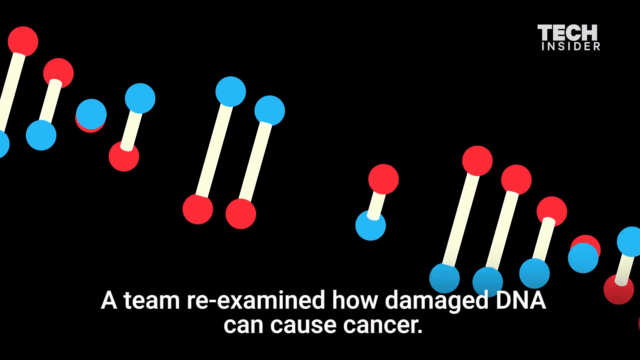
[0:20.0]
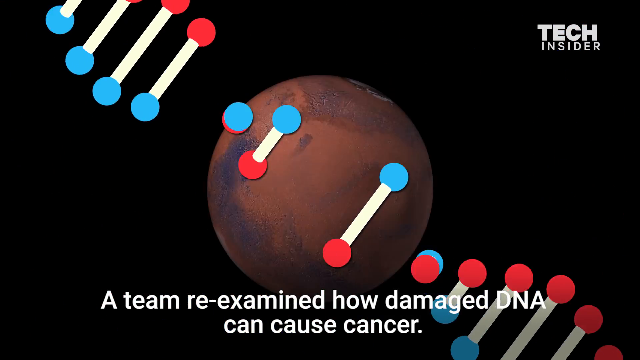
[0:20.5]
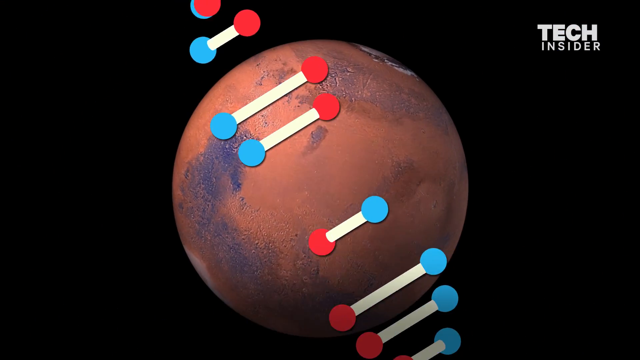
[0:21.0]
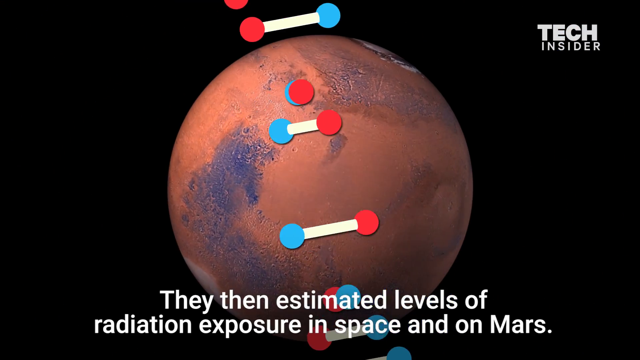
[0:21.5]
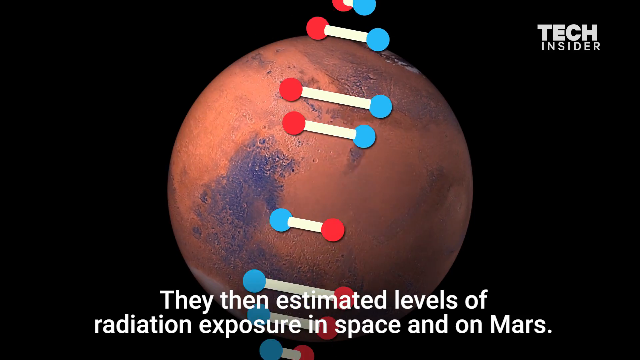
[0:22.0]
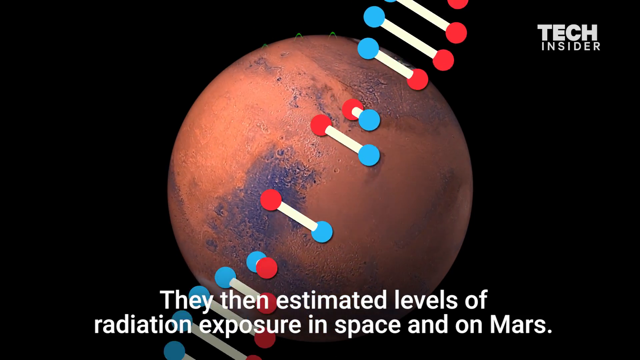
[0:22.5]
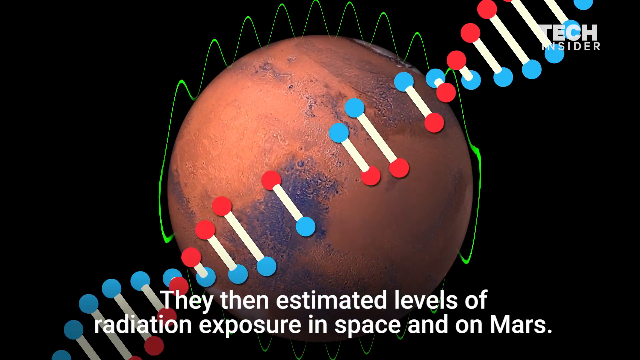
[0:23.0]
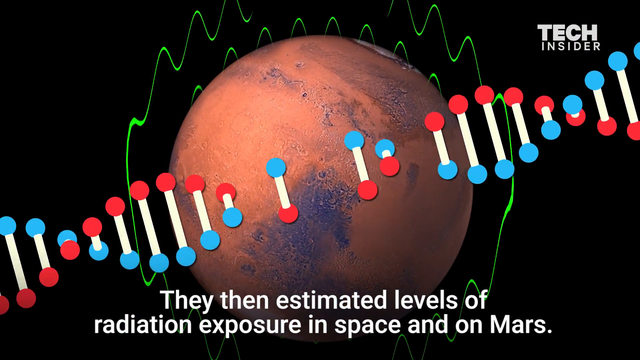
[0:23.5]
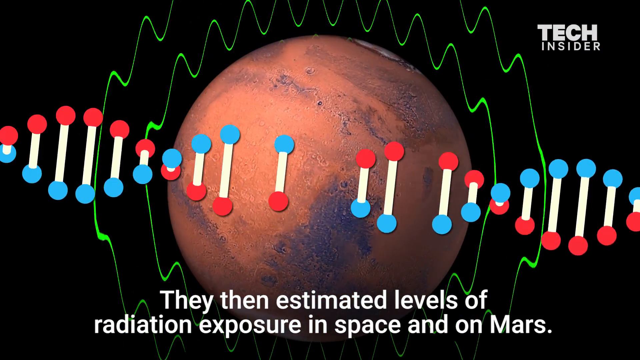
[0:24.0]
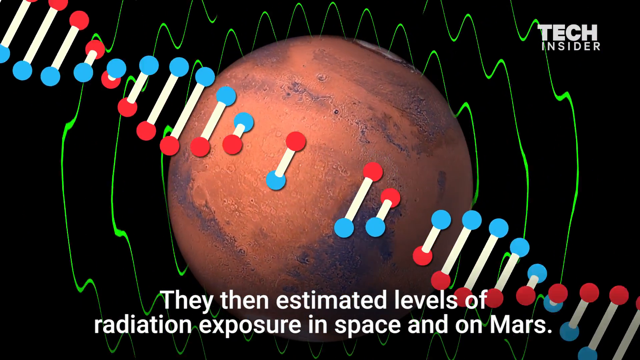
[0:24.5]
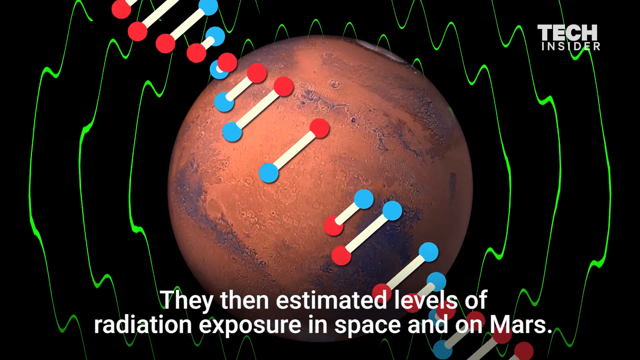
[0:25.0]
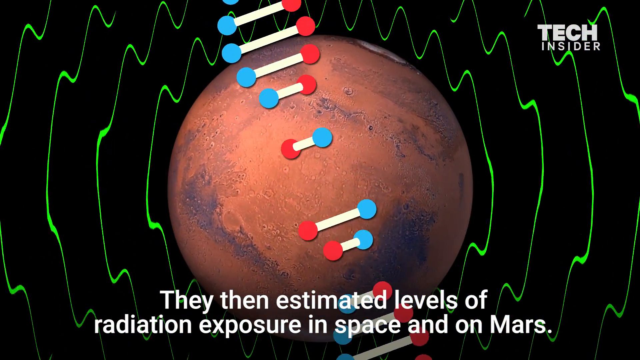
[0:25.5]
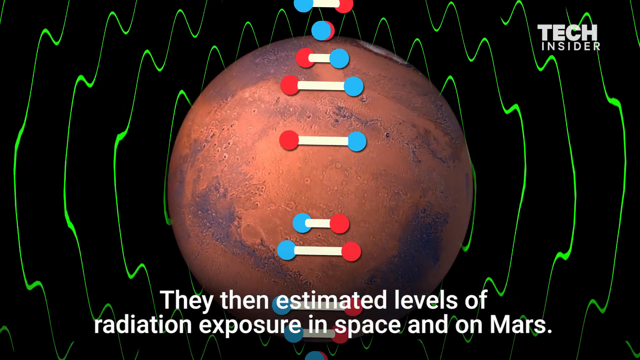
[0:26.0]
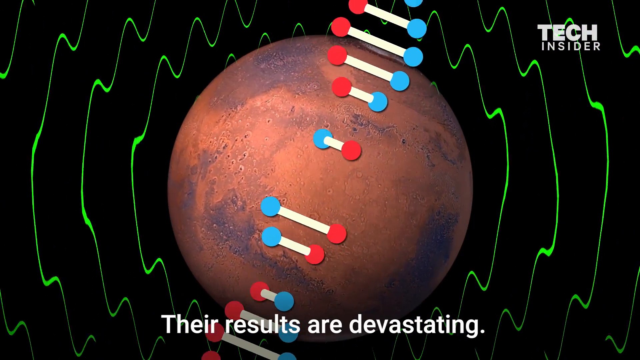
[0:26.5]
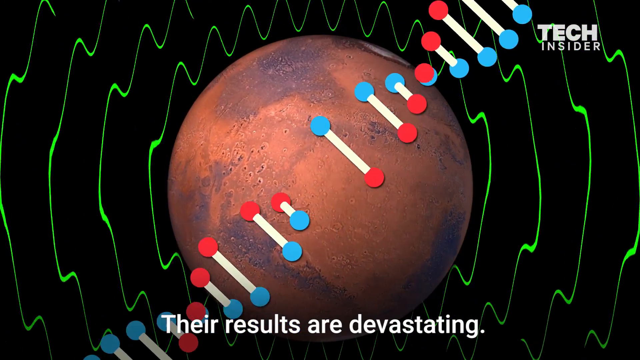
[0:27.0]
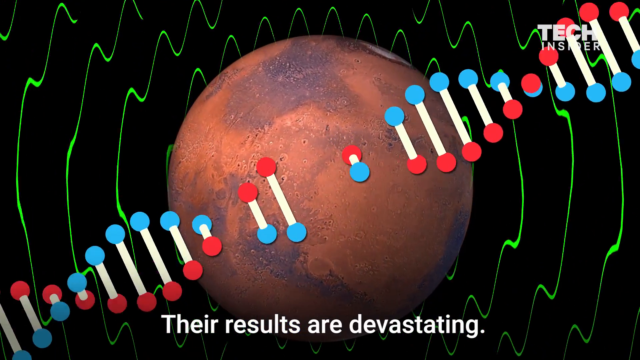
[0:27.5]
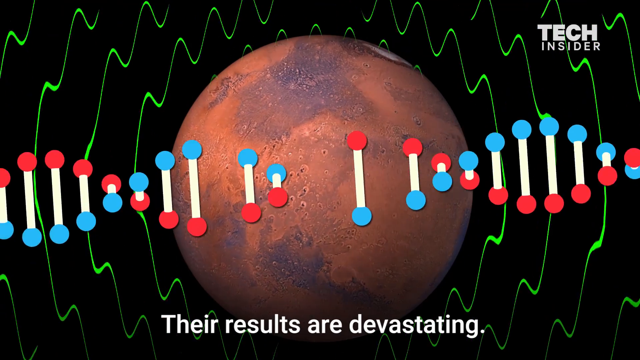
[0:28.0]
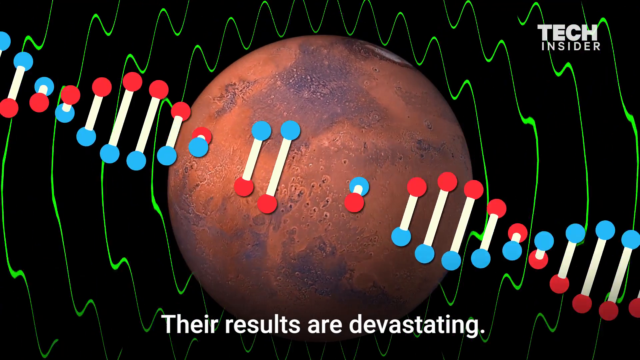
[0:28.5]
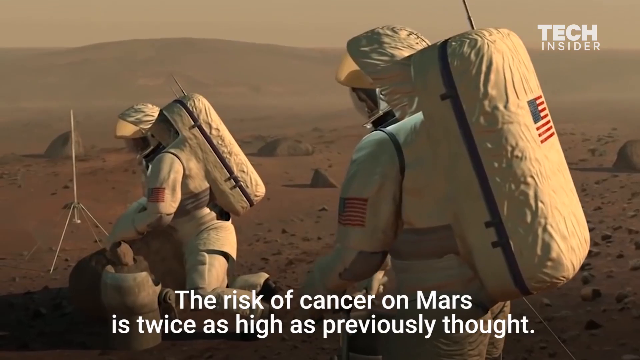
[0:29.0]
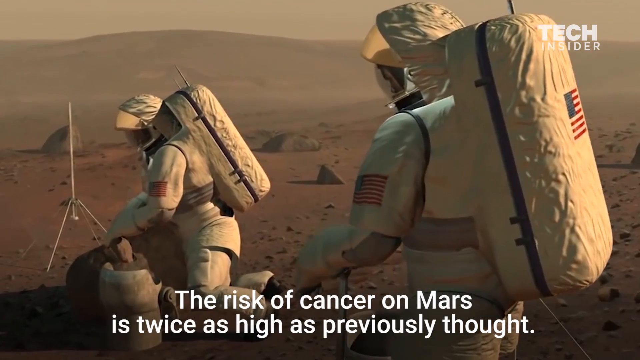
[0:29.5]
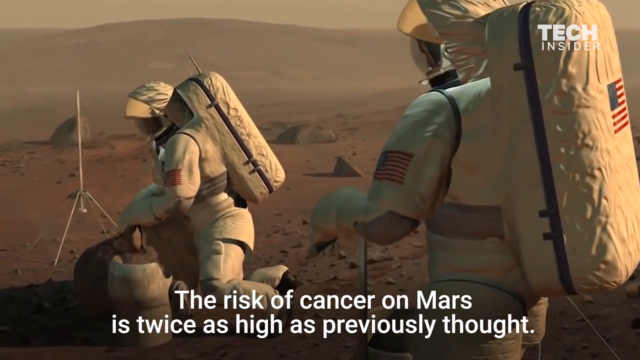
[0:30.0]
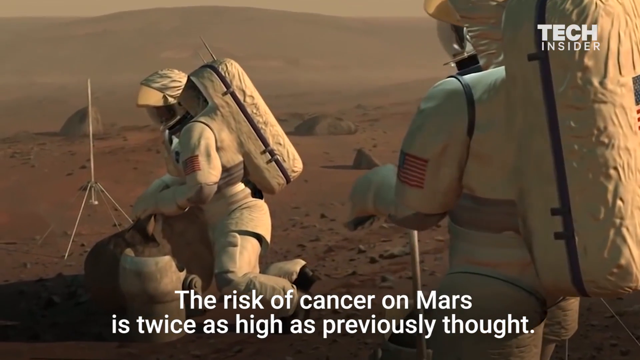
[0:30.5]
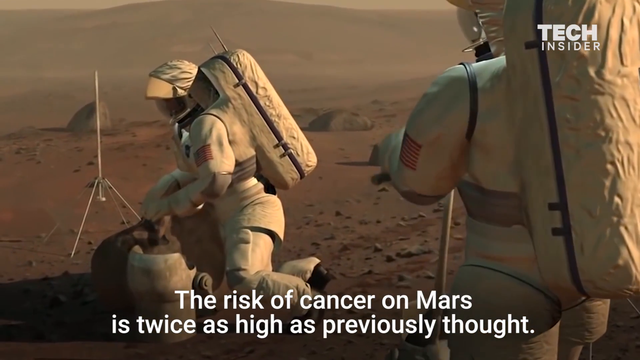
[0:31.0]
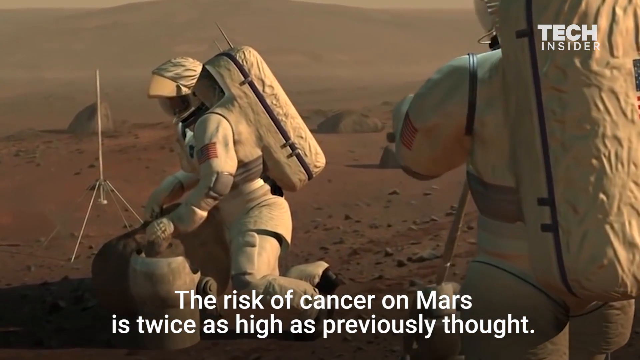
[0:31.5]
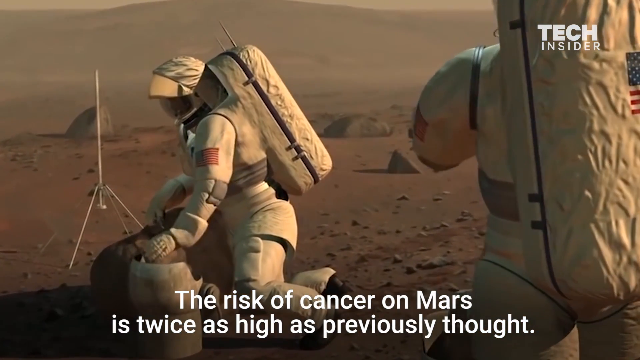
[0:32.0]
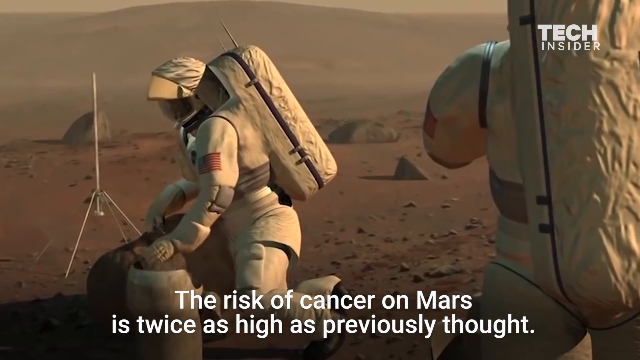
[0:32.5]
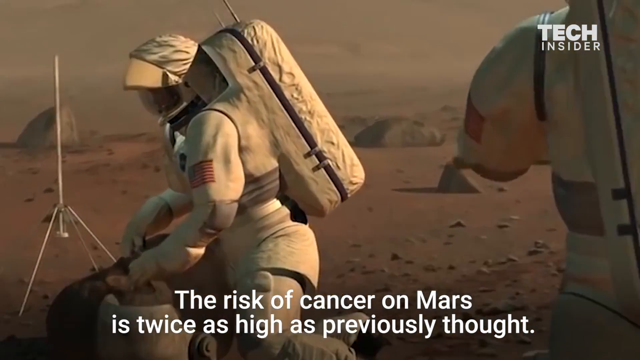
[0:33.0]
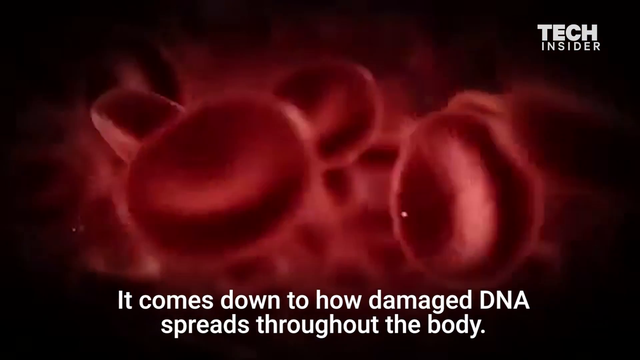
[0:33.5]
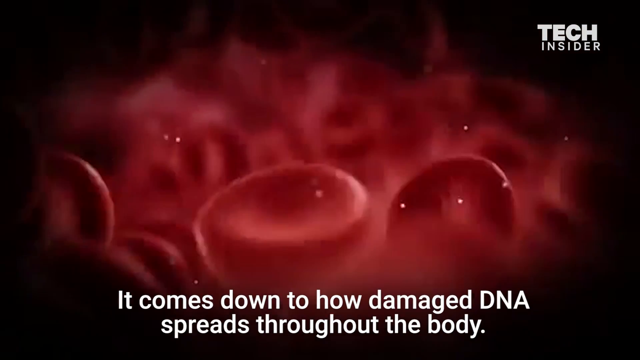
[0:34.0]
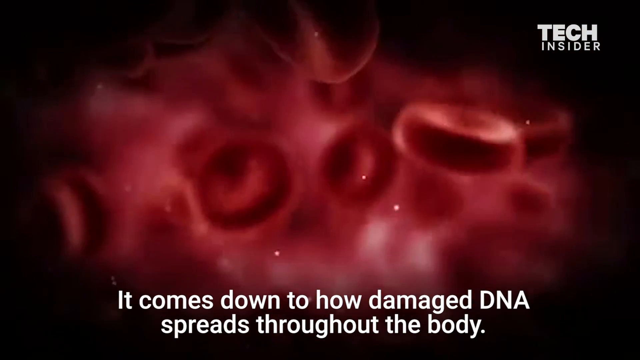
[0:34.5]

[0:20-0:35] More CGI graphics follow. People in spacesuits do various things on the surface of the planet. A DNA helix, or a simple graphic of one, spins around. The red planet appears with green waves sort of emanating from its side, and there are shots of red blood cells coursing through what is presumably a human body.